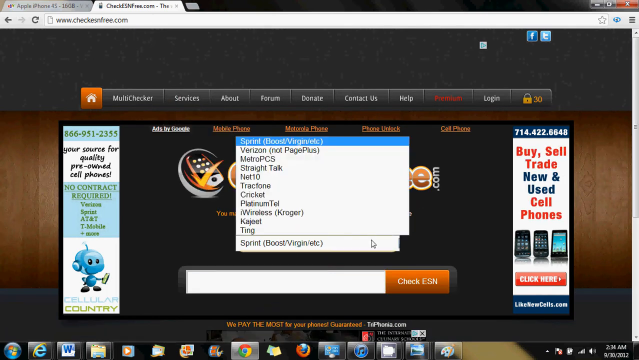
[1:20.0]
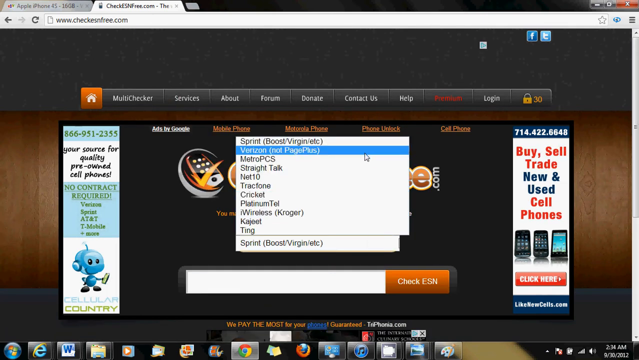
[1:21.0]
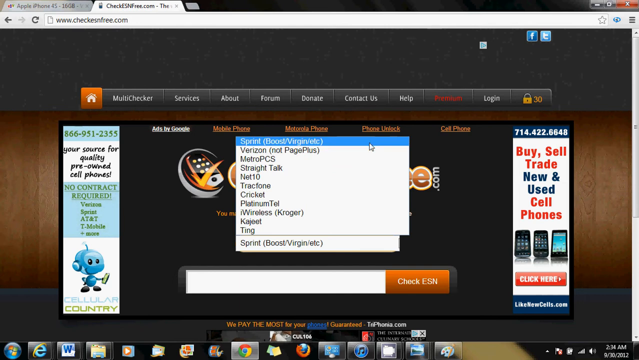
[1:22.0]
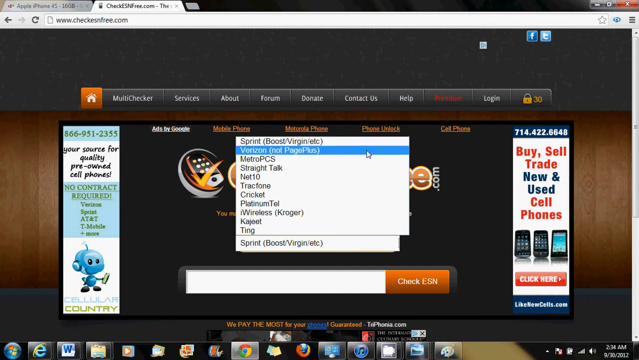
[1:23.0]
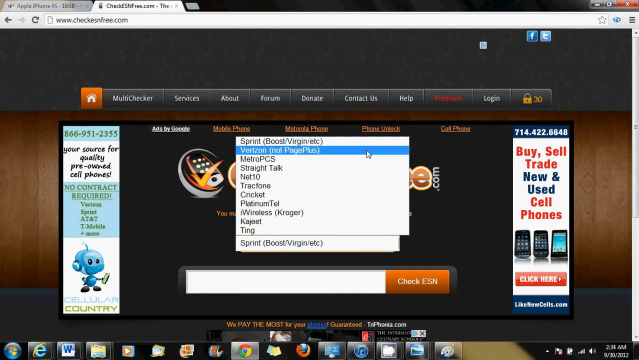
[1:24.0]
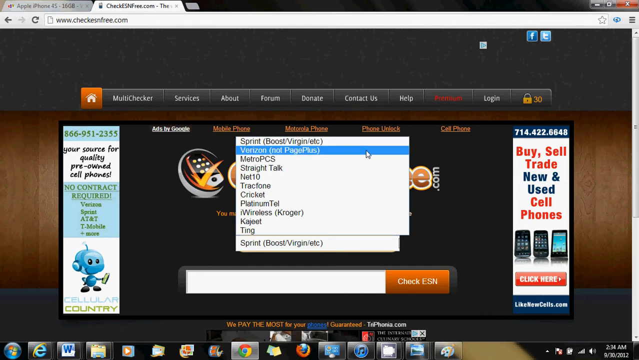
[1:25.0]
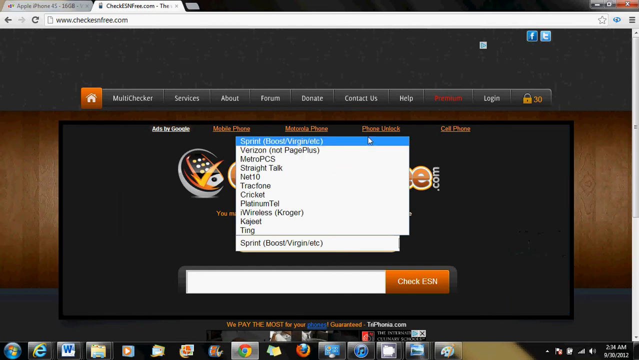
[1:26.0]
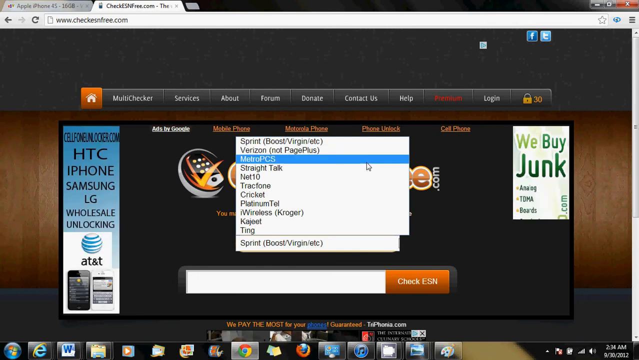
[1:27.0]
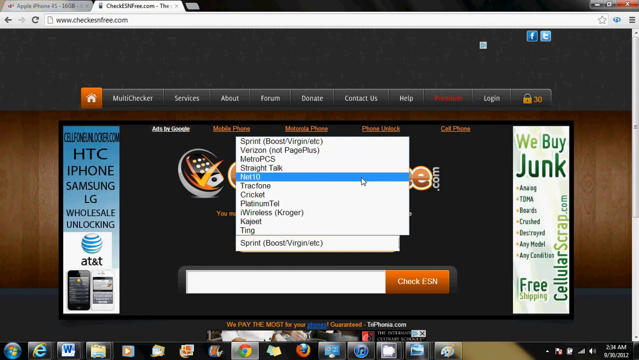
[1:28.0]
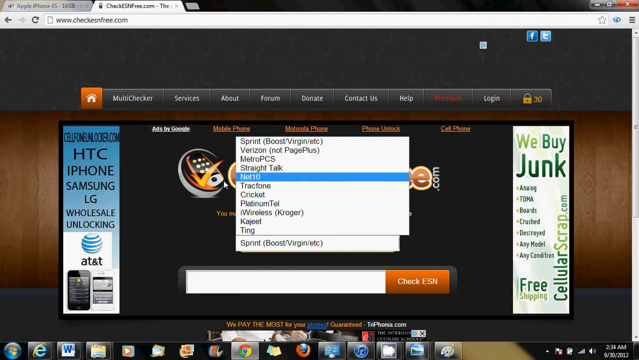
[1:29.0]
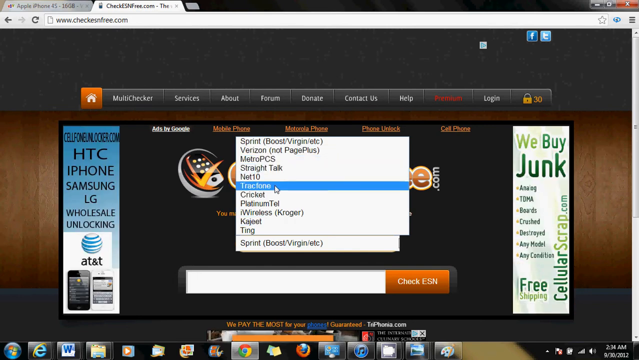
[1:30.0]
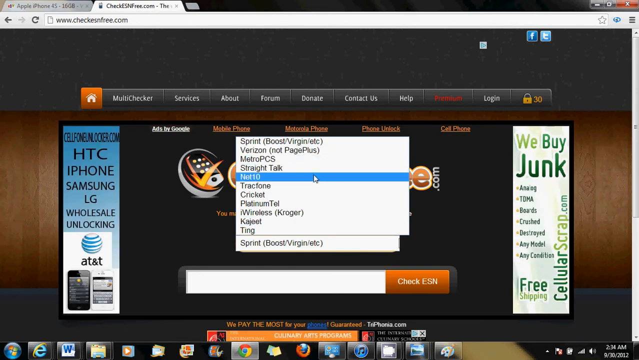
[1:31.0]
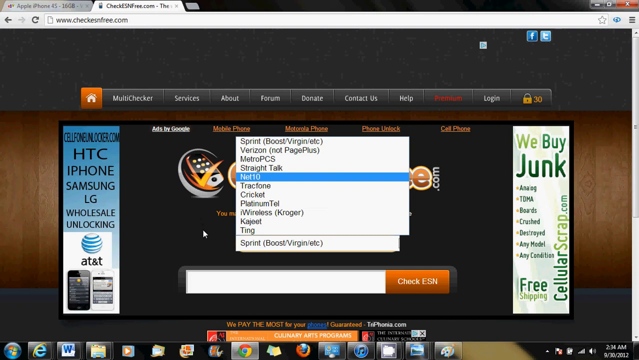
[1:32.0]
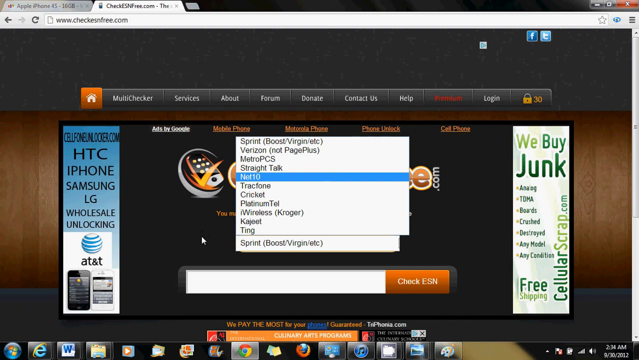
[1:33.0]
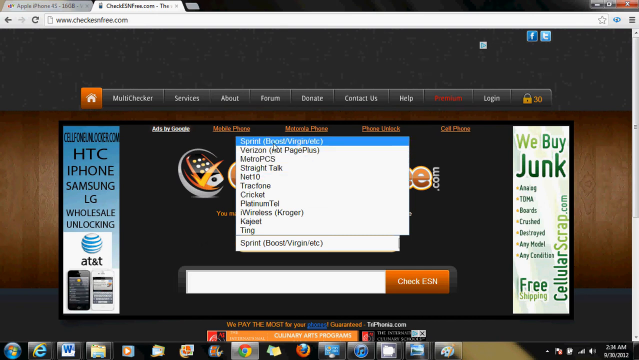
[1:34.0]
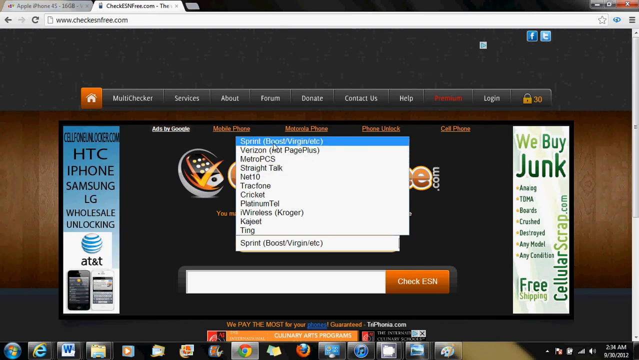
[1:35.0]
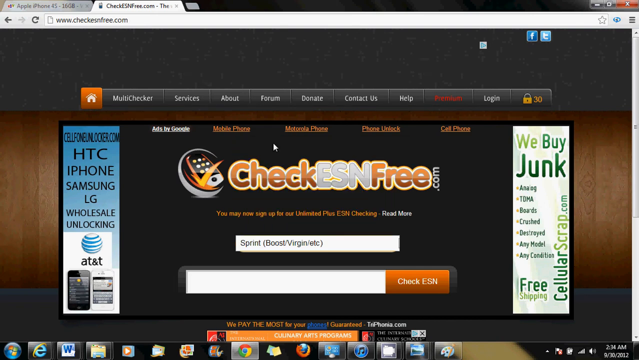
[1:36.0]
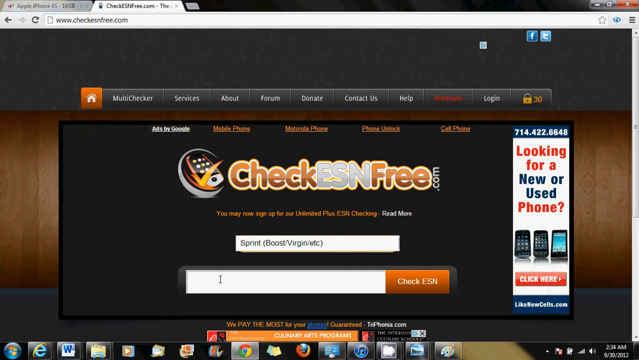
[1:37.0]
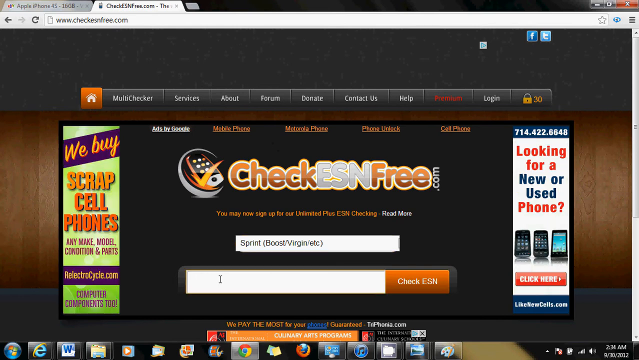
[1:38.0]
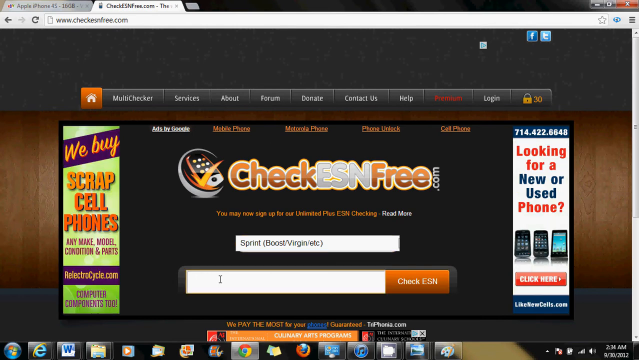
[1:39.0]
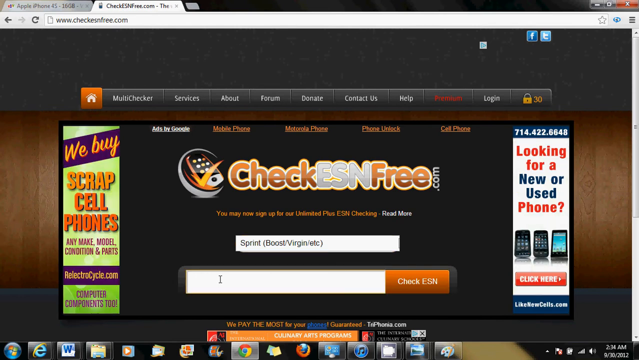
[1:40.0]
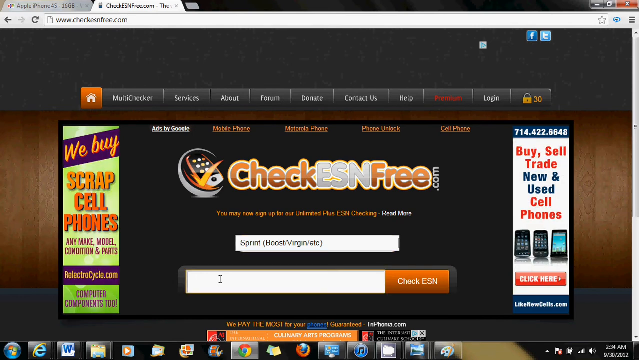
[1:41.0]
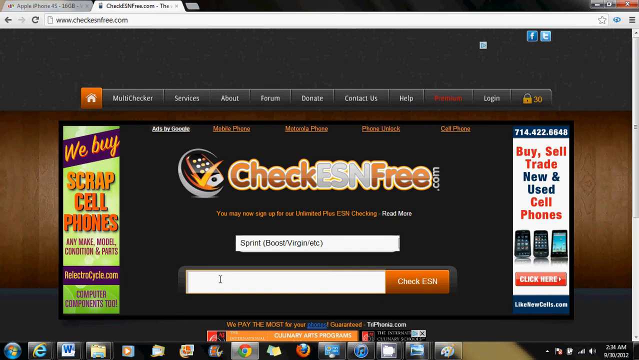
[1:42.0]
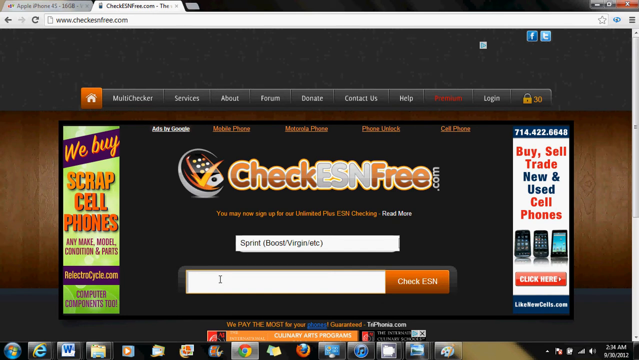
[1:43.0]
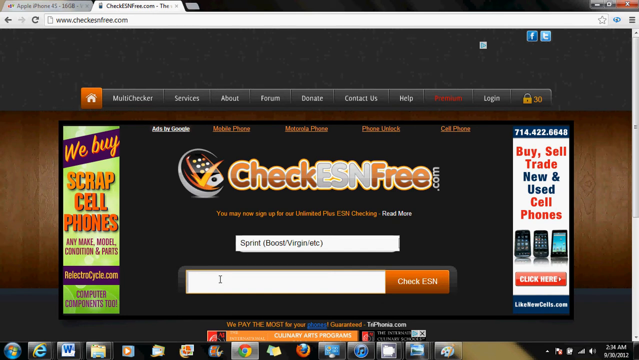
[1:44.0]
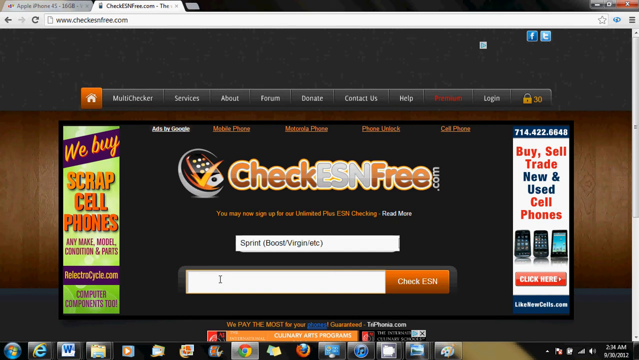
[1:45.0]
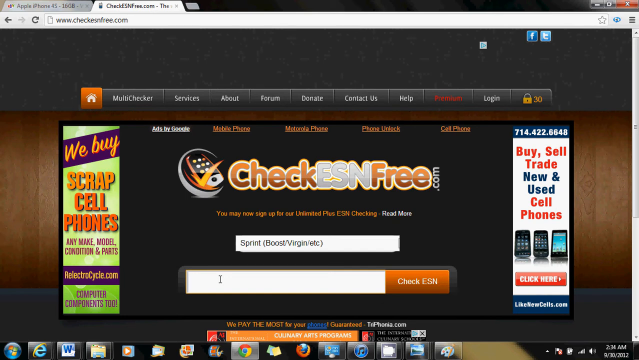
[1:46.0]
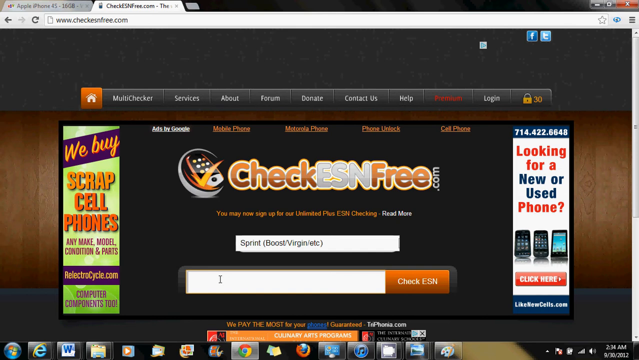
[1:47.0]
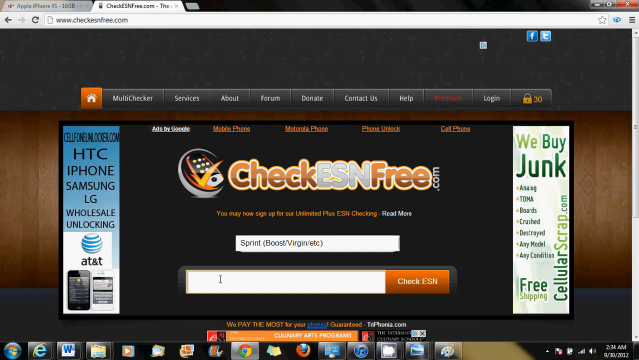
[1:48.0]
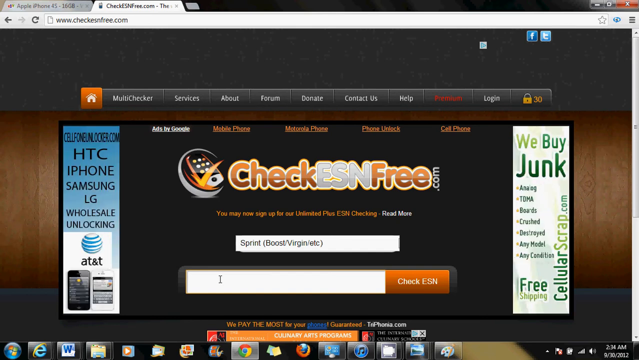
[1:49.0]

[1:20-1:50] A drop-down menu in the center is used to select a phone carrier. Sprint is currently selected, and the menu shows other carriers such as Verizon and Platinum Tel; the person apparently is about to choose Sprint and then check the ESN number, but for now the video pauses on this page. In the center is a large logo of the website, "CheckESNFree.com," with "Check" and "Free" in orange text and "ESN" in silver, all with a yellow border. On the left side is a small logo of a phone with an orange check mark through it.